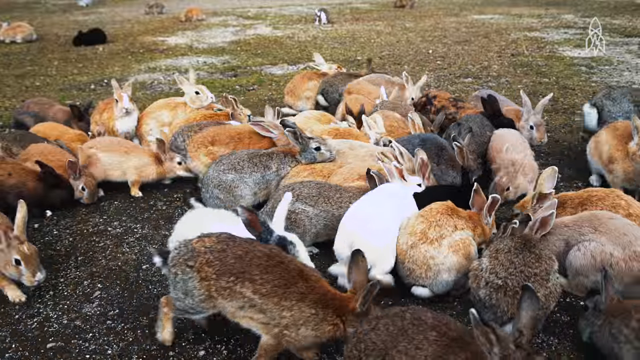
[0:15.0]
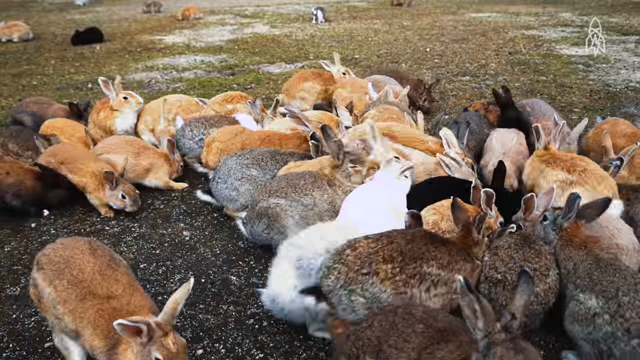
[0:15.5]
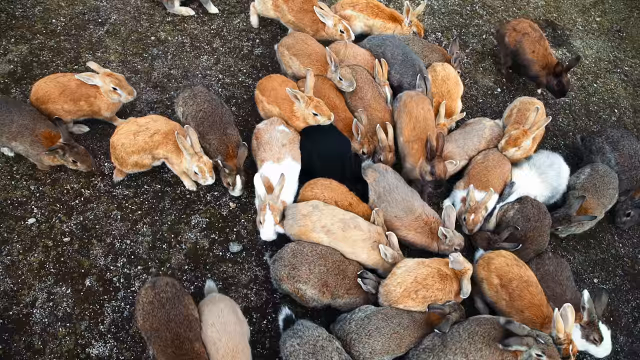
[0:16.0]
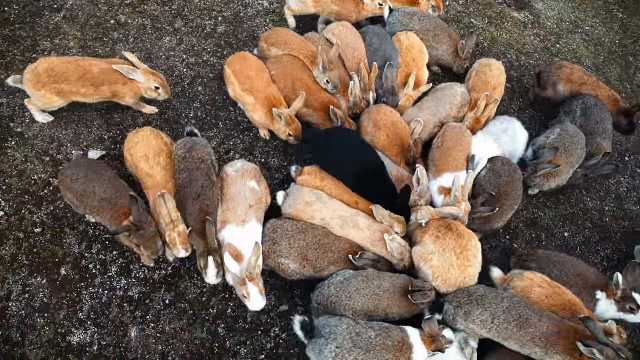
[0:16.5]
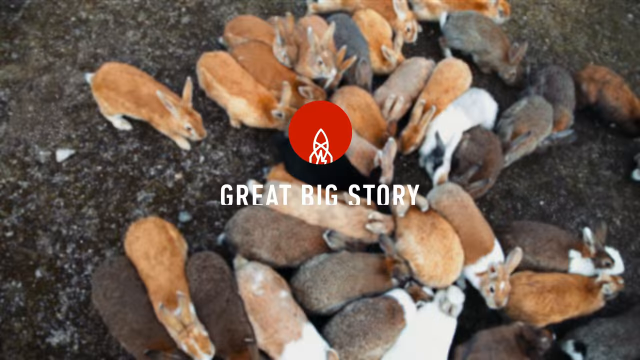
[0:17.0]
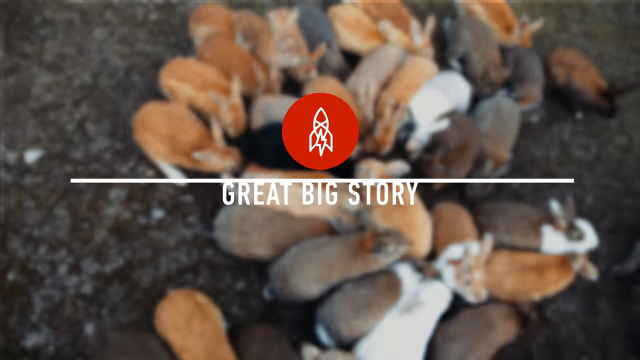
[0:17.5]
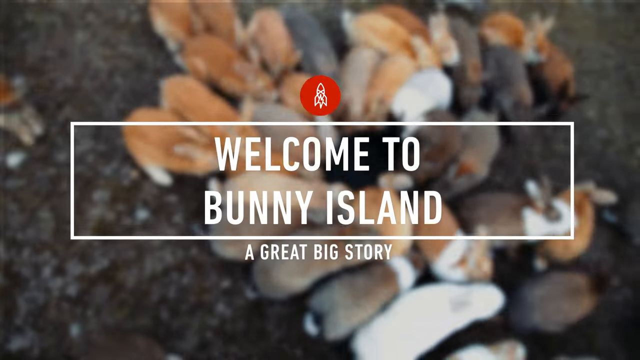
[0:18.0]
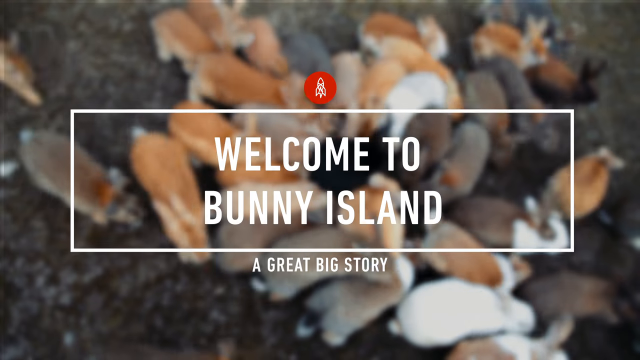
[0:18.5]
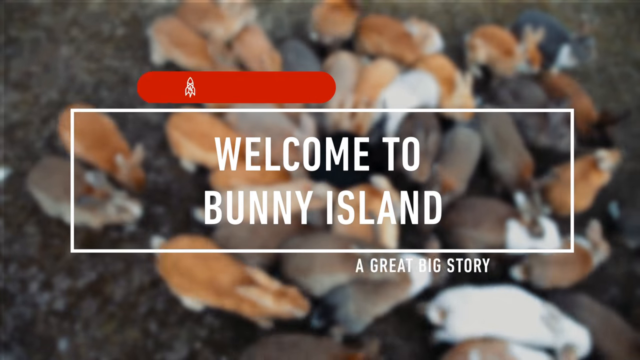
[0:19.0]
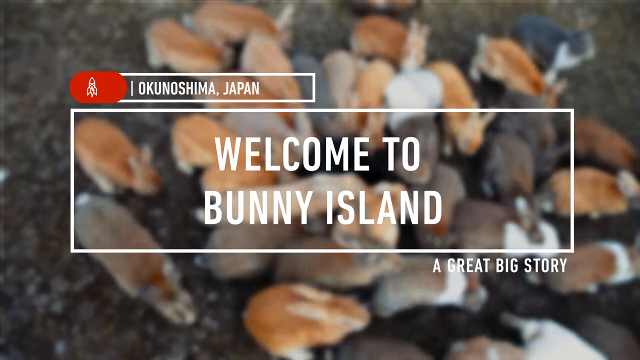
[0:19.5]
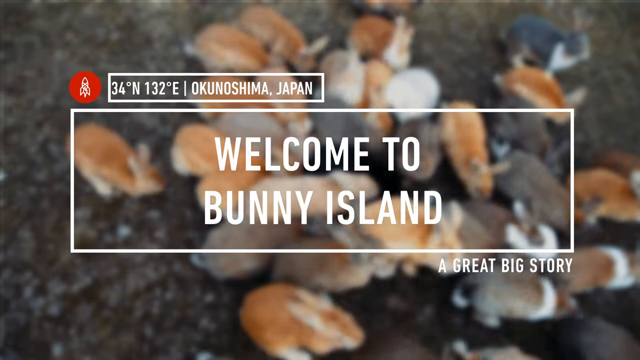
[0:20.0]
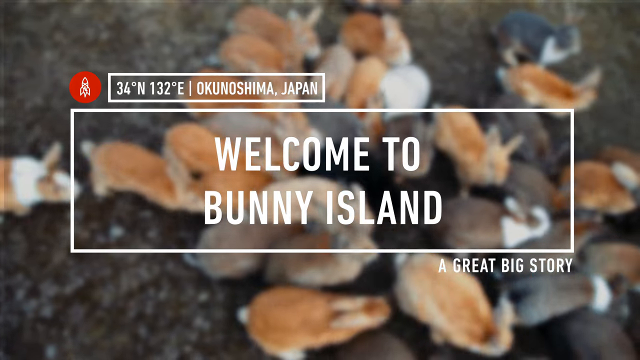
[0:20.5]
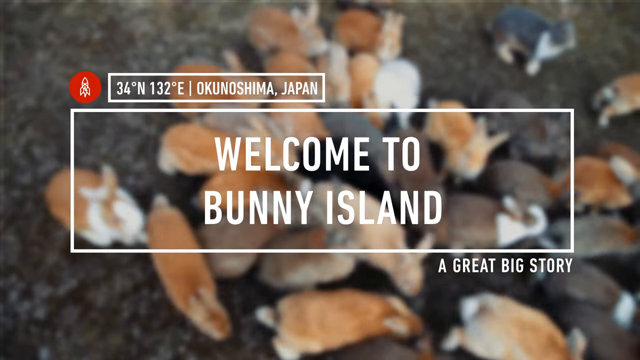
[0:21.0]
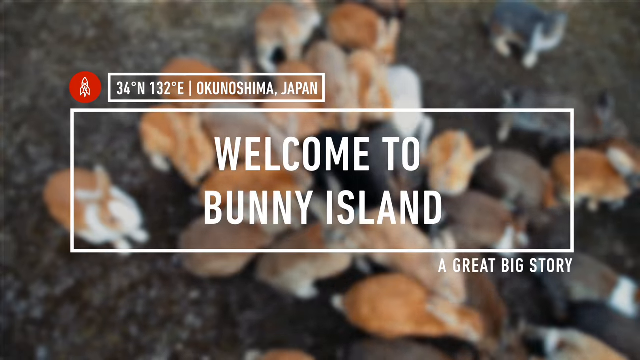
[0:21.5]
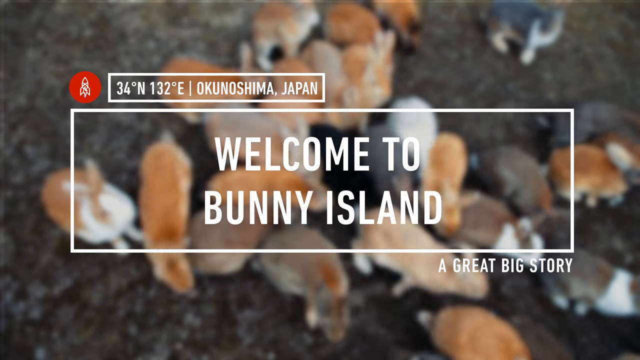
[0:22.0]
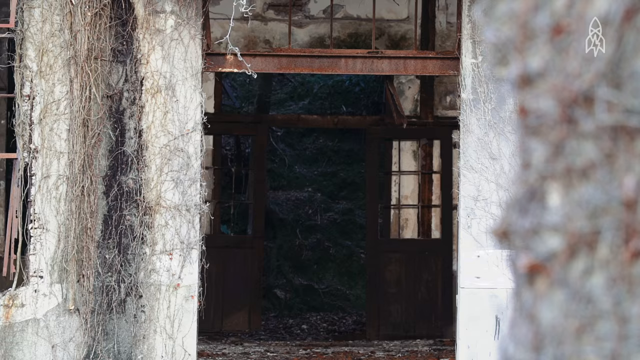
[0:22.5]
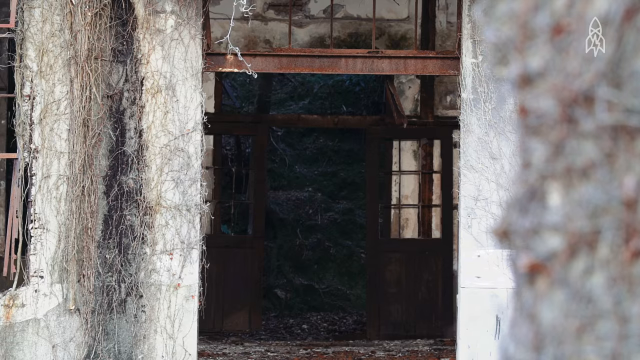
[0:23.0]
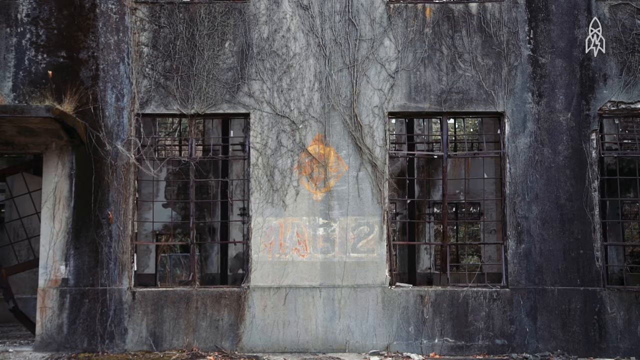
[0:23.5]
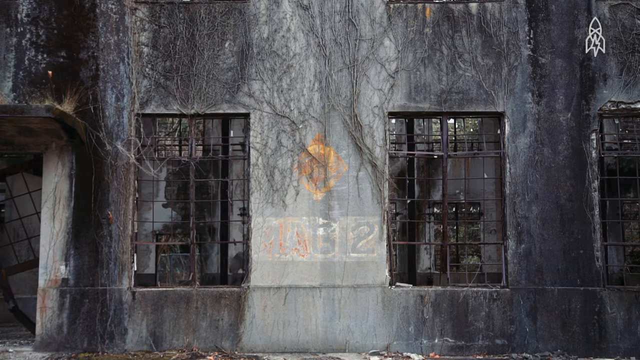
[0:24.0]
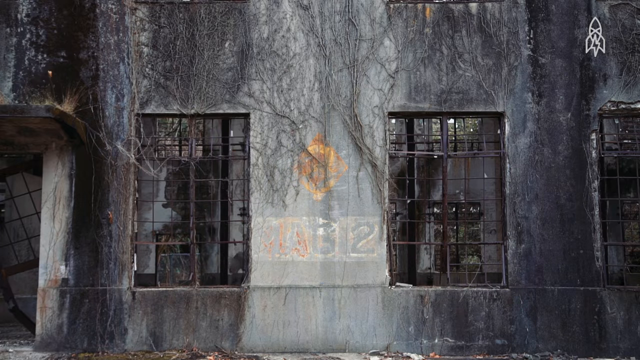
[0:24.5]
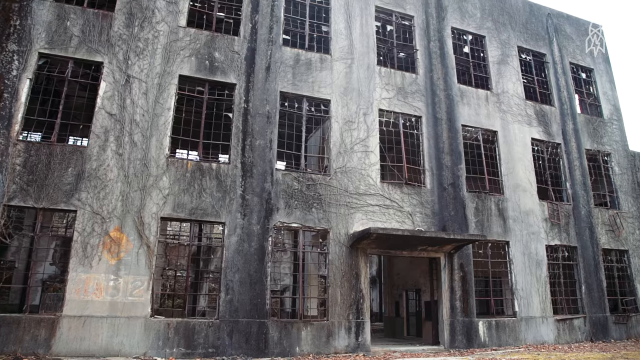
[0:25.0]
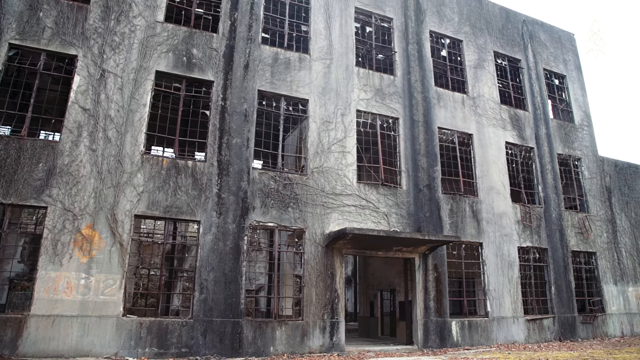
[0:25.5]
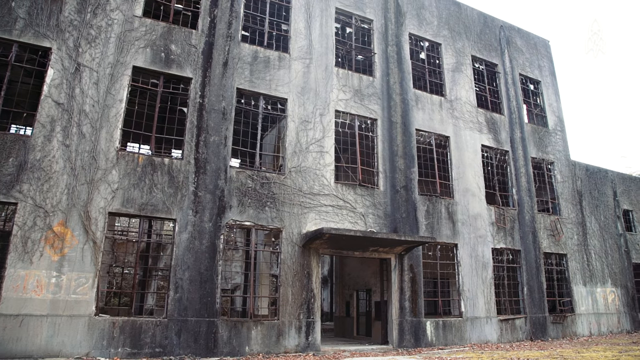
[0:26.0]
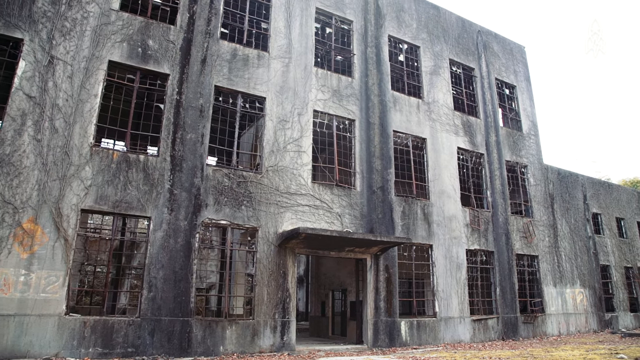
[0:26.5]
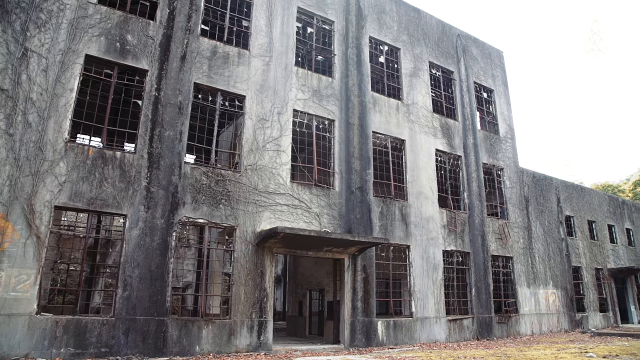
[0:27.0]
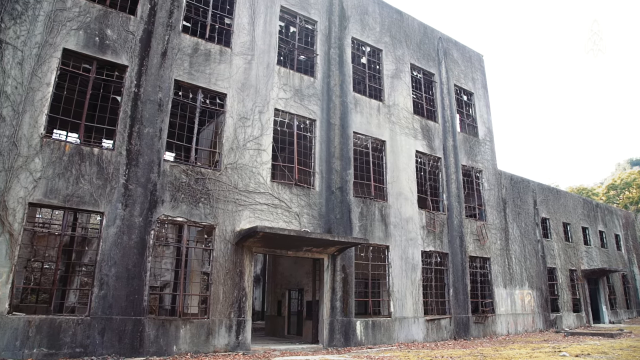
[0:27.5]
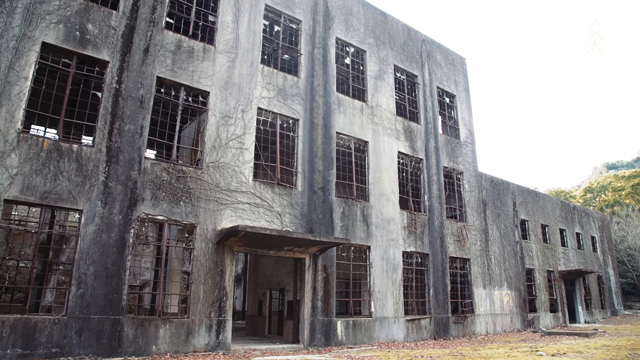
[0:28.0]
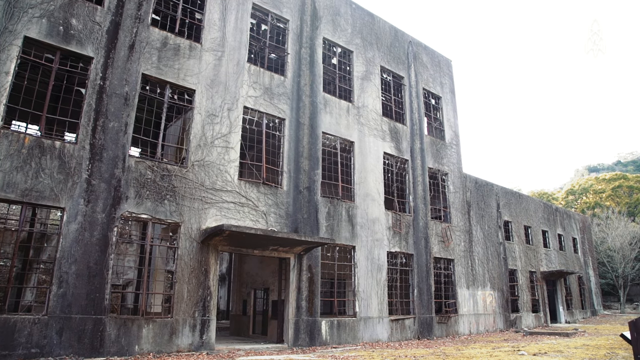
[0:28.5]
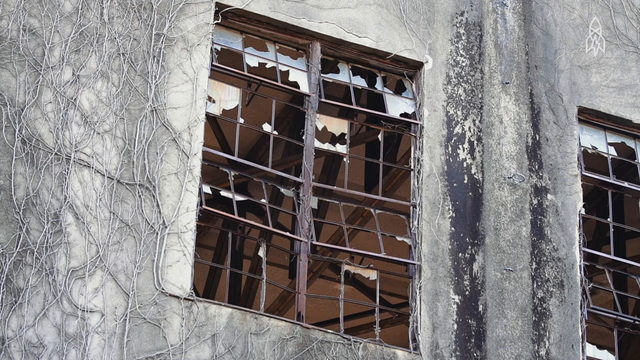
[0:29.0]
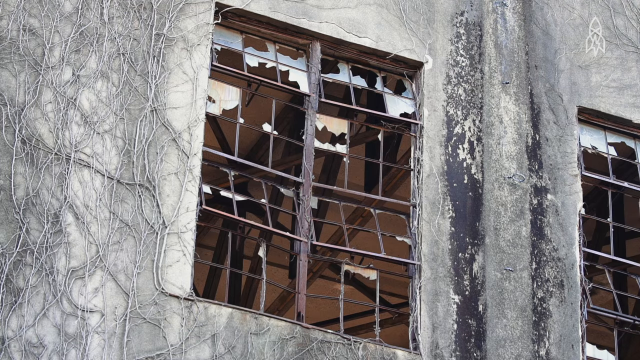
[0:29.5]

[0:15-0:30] A bunch of rabbits are together in one place, apparently scraping for something. On-screen text reads "okoshima japan" and then "welcome to bonnie island", and "a great big story" is also written. An abandoned building appears to be close by, with a lot of things growing on it; it looks like it has been there for years without anyone doing anything to it. It is very deserted, with many windows, the windows broken and green plants on the building.